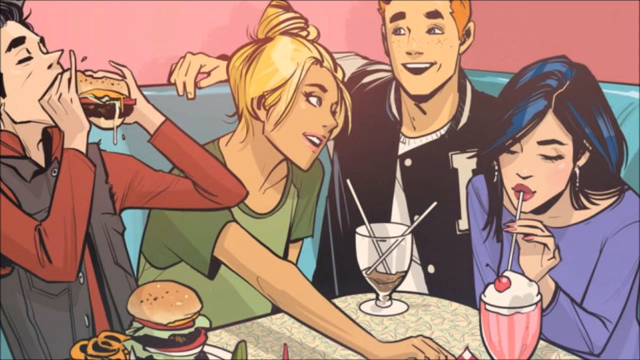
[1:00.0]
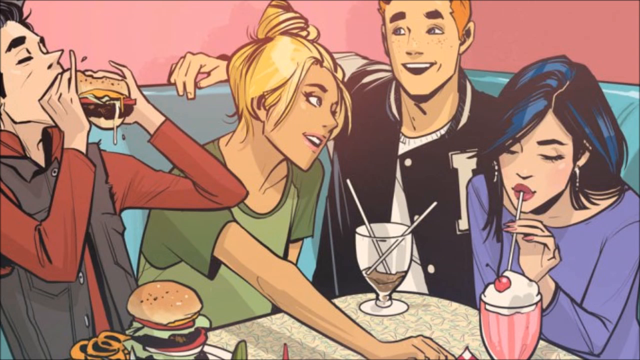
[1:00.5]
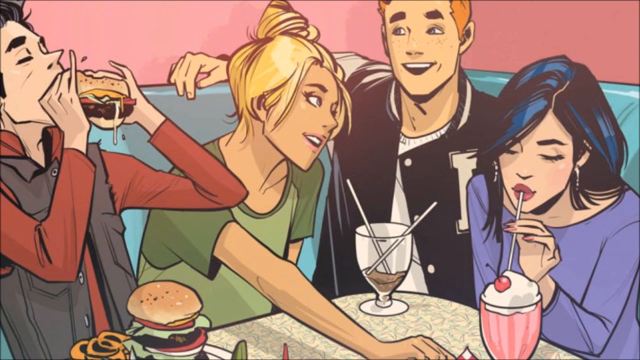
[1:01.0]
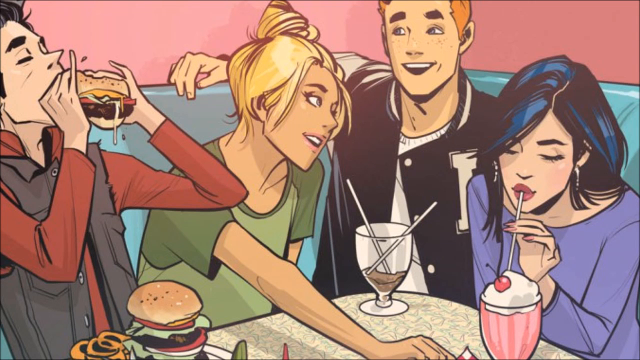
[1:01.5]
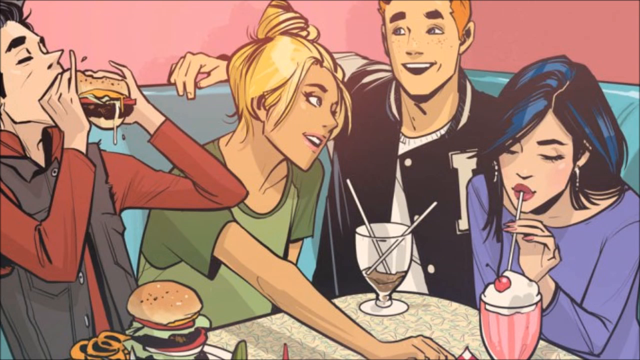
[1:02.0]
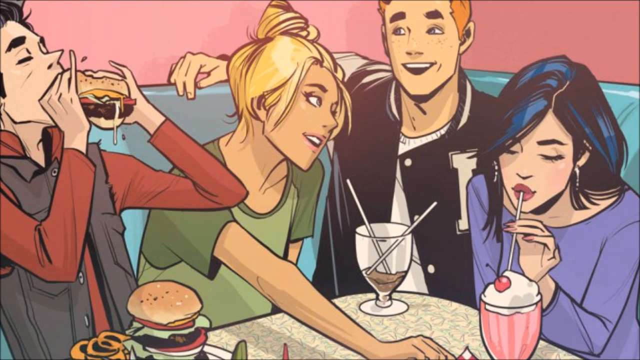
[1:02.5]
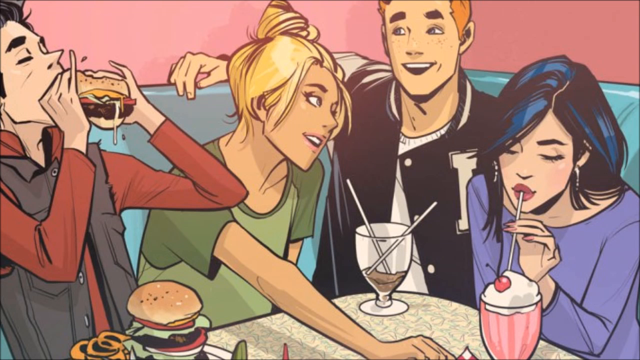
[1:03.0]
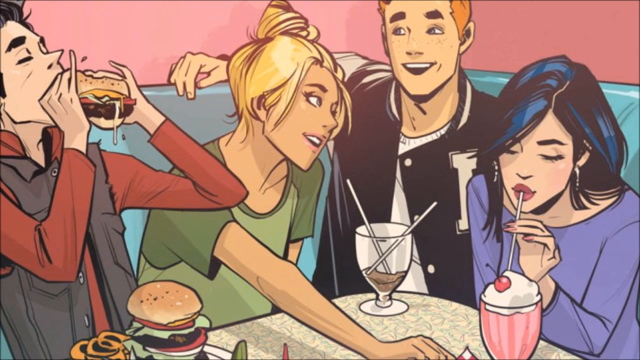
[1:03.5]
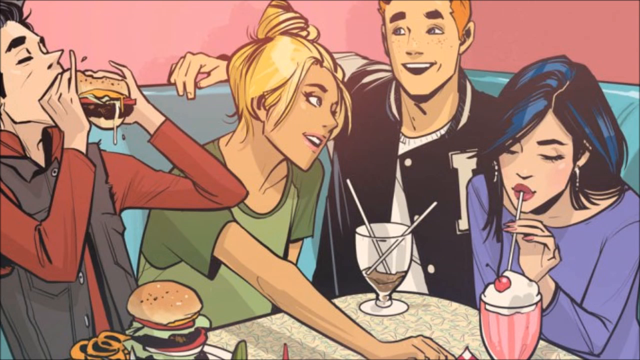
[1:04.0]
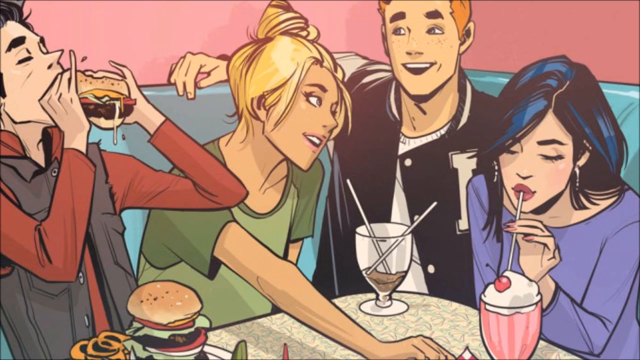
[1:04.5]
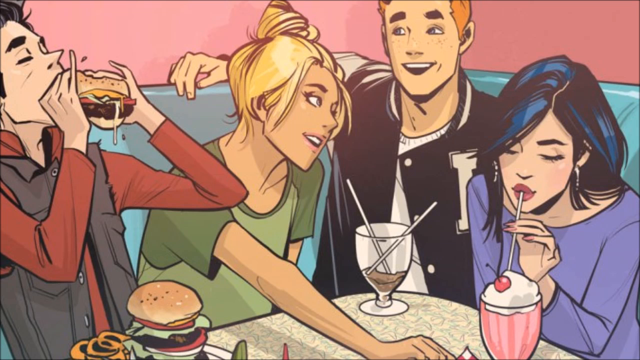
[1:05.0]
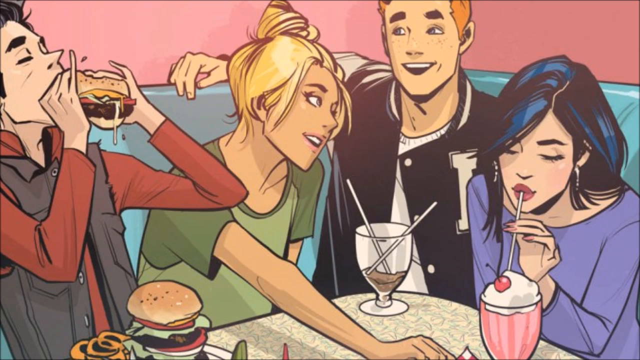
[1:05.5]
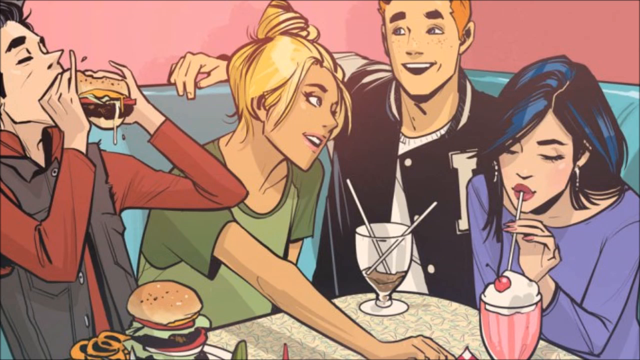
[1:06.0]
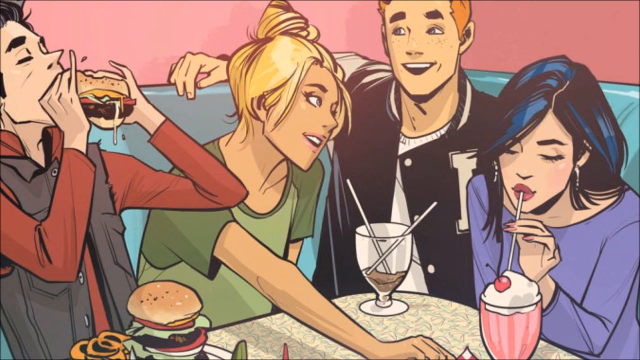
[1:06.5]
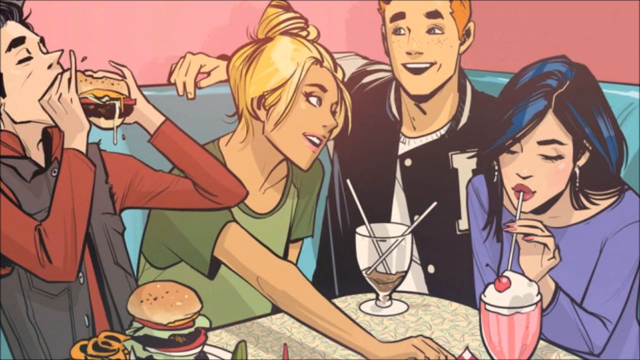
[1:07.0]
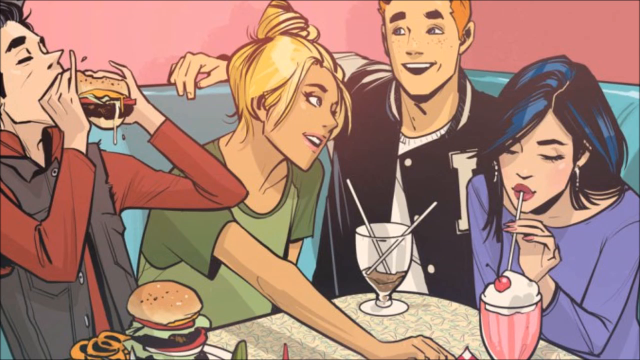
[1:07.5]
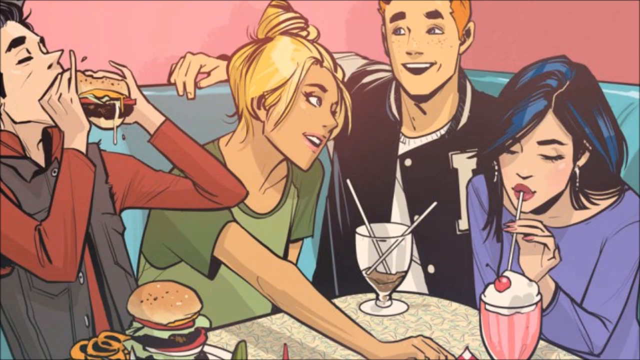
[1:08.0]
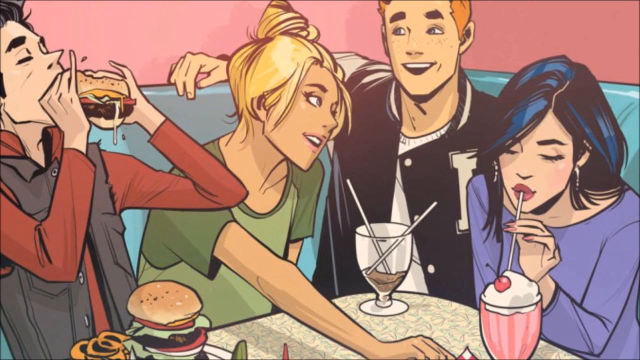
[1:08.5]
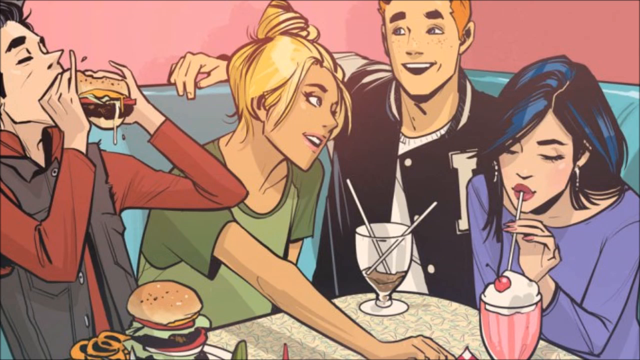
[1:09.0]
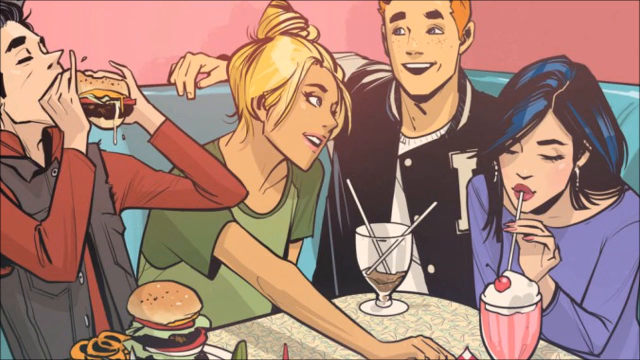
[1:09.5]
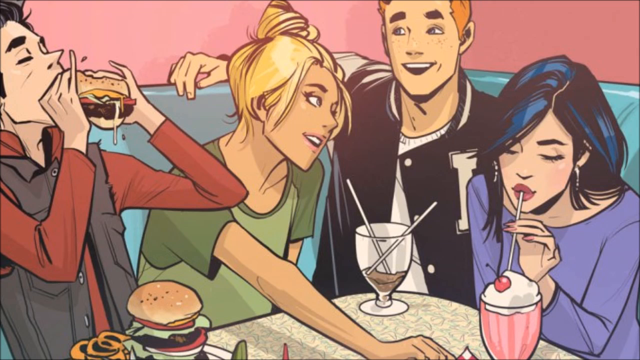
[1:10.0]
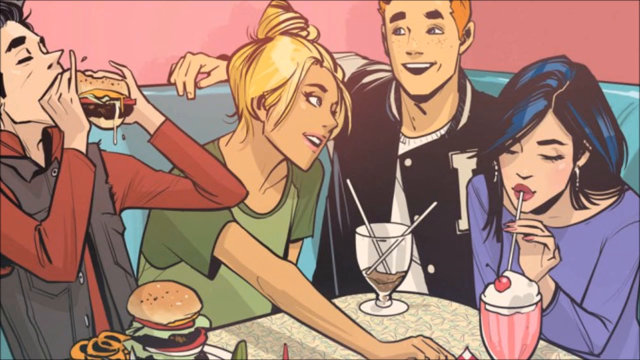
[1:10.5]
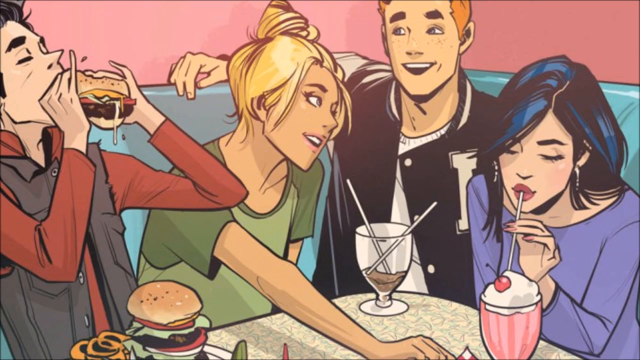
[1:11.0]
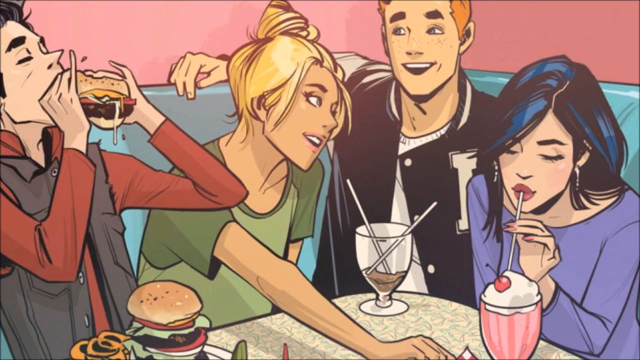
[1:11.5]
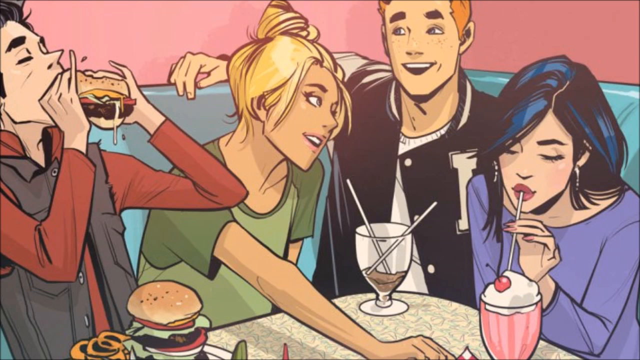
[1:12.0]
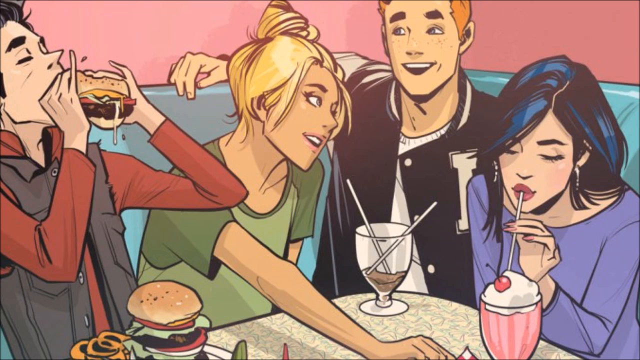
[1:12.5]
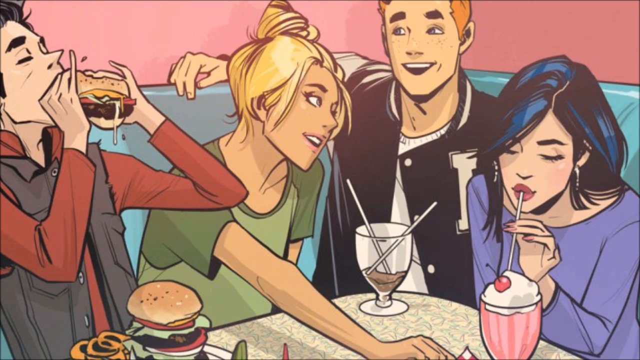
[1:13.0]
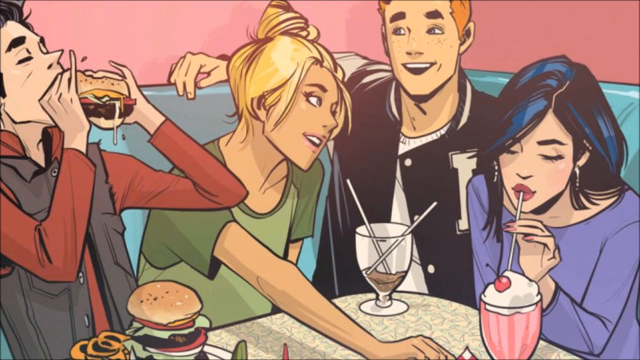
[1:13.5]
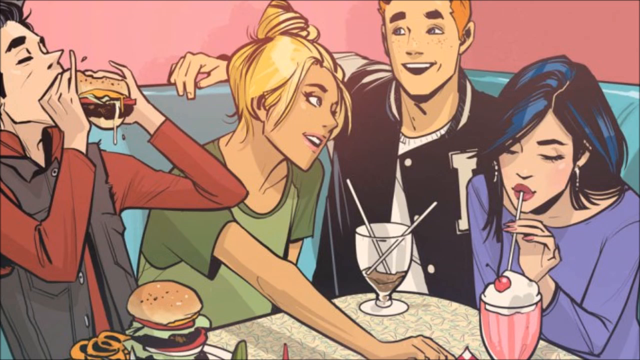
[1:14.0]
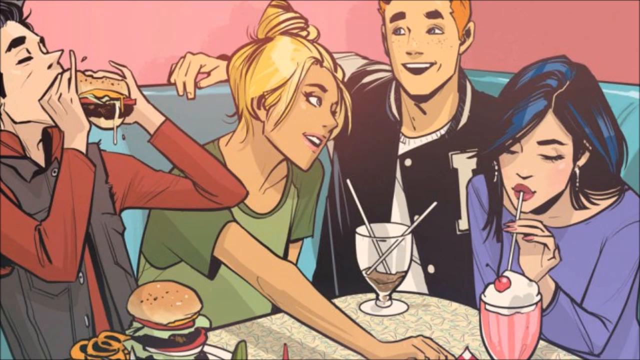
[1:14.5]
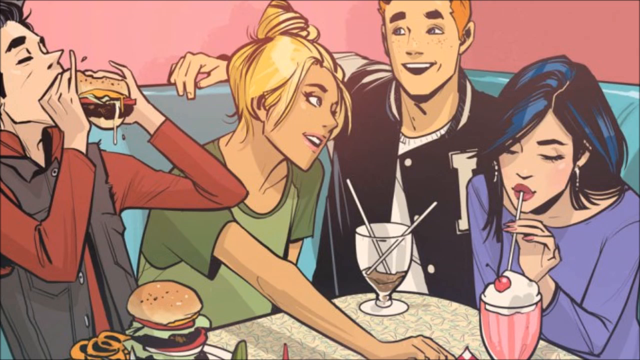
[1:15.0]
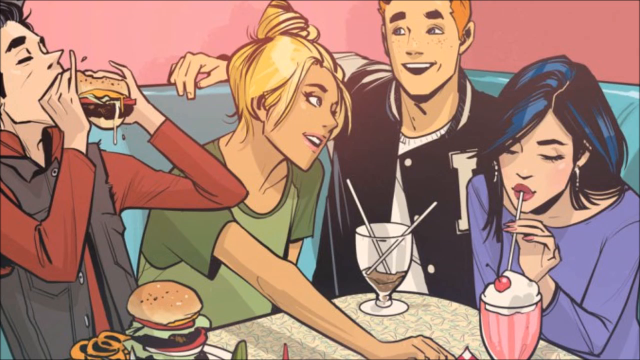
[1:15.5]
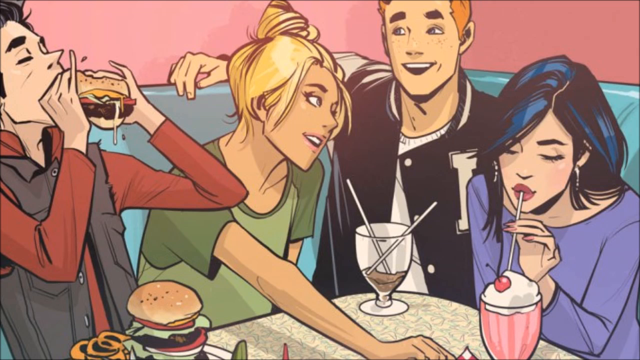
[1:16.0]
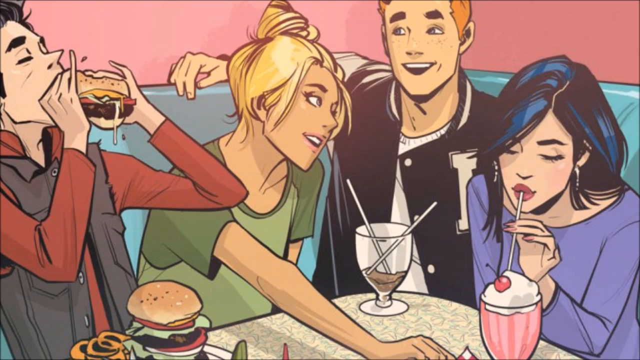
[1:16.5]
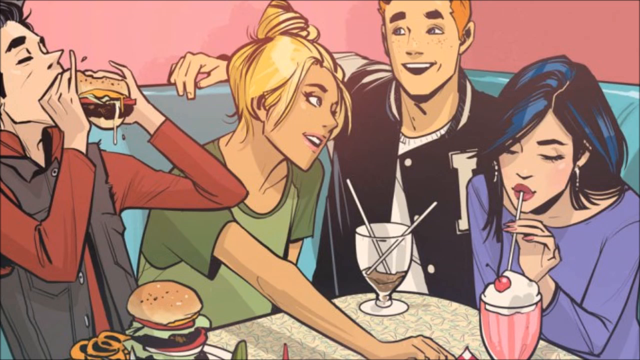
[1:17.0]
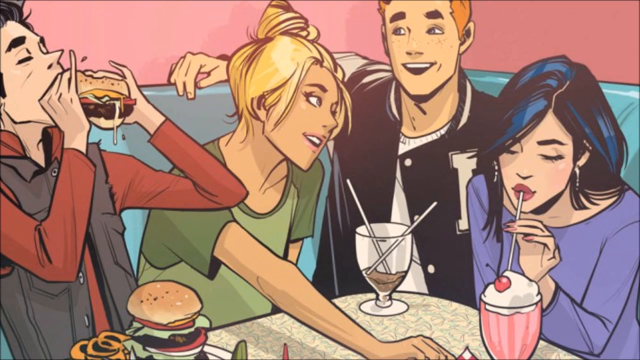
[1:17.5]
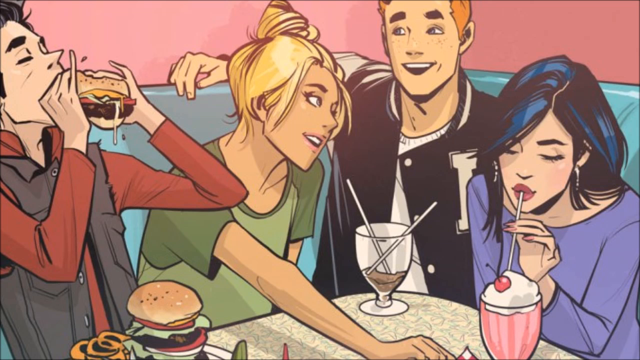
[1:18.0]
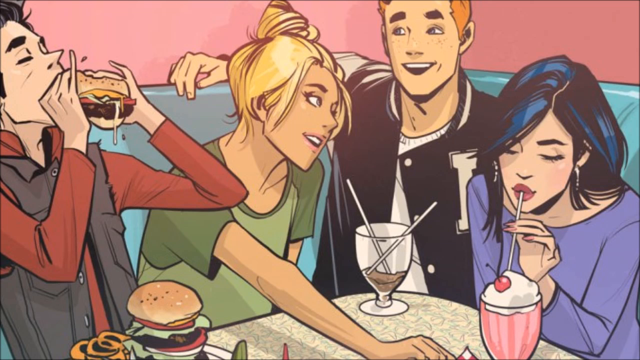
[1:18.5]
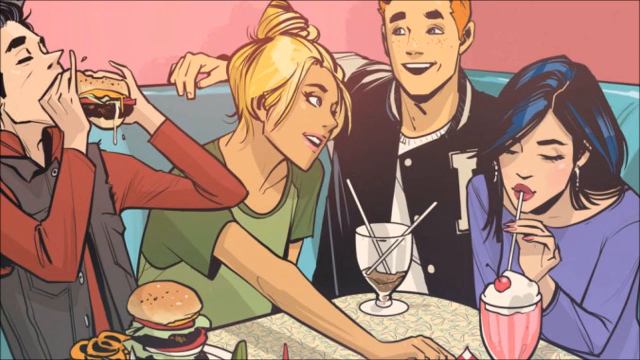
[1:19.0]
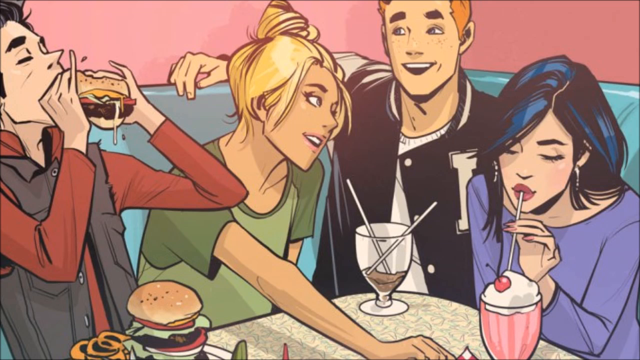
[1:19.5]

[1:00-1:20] The four animated people, two boys and two girls, seem to be couples. On the left, a woman with black and blue hair wears a purple long-sleeved t-shirt, earrings and nails, and sips through a straw a strawberry milkshake topped with whipped cream and a strawberry. Next to her, a man with brown hair wears a white t-shirt and a black and white jacket. Next to him, a woman with brown hair in a green t-shirt also sips a chocolate milkshake with two straws, which seems to be at the bottom of the glass. Next to her, a man holds a juicy burger; he wears a red long-sleeved t-shirt with a black half body warmer.